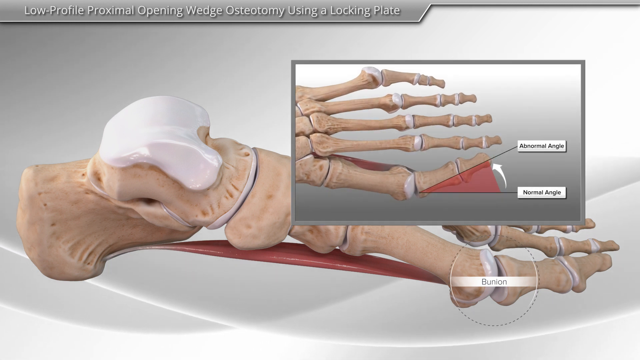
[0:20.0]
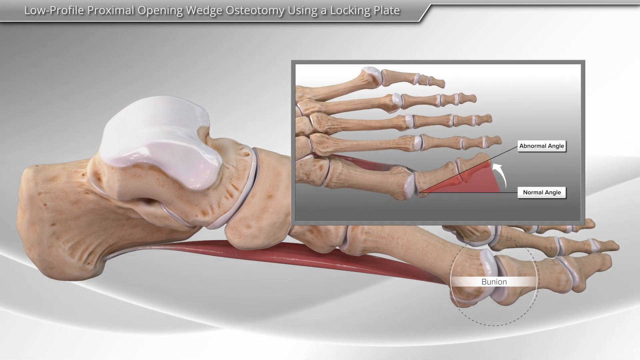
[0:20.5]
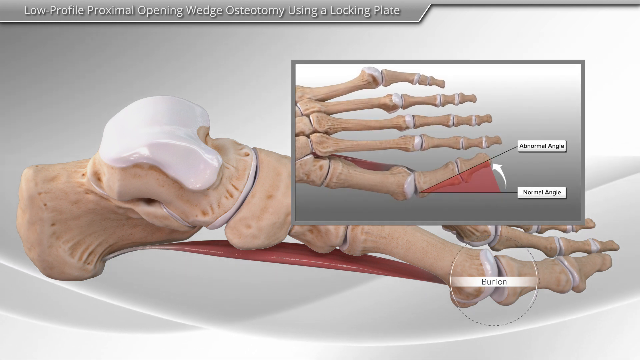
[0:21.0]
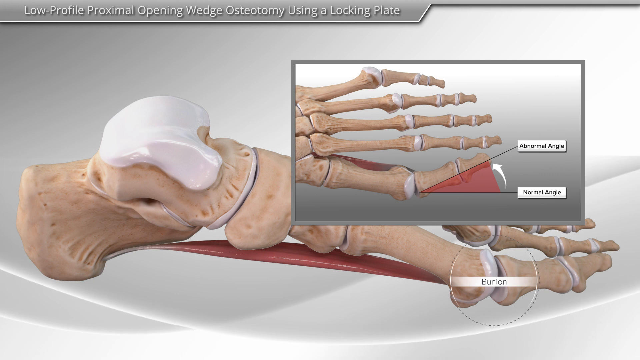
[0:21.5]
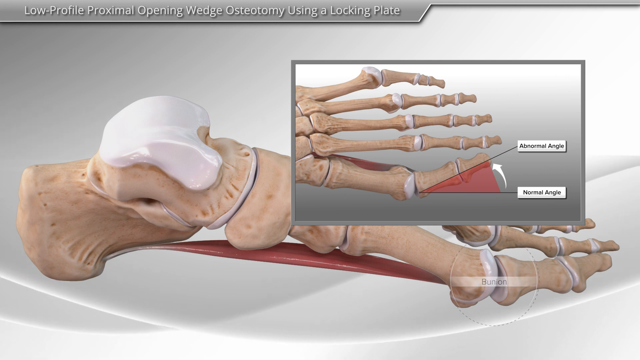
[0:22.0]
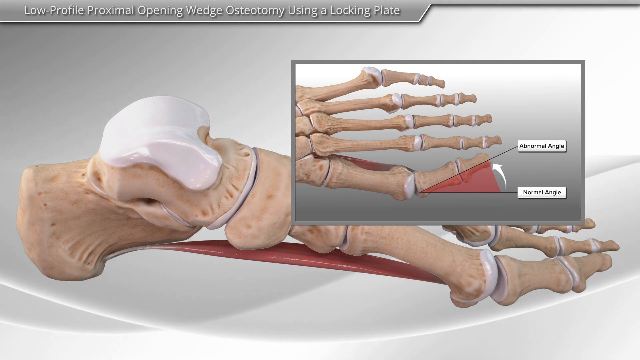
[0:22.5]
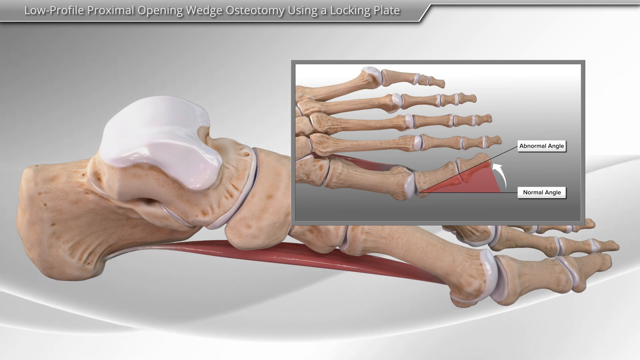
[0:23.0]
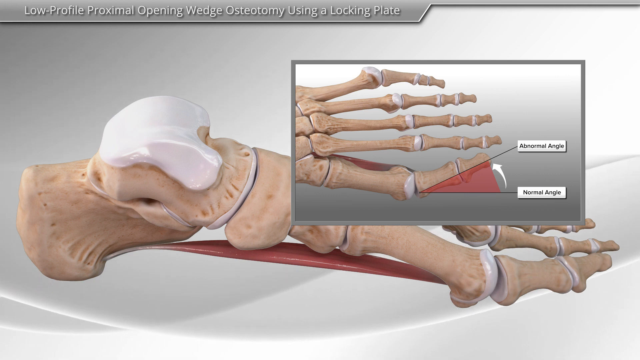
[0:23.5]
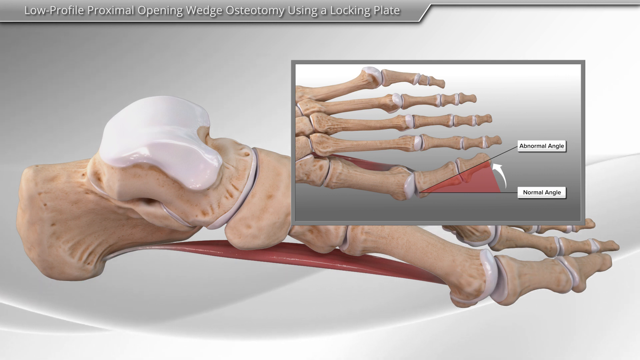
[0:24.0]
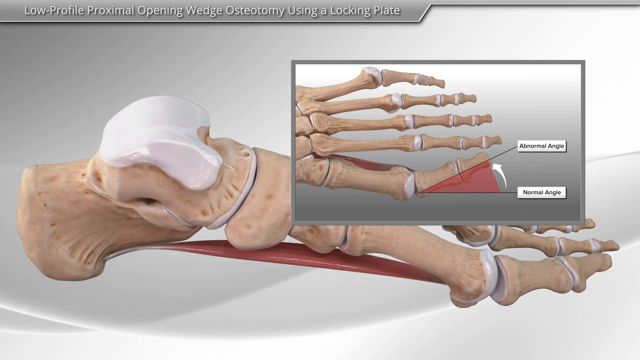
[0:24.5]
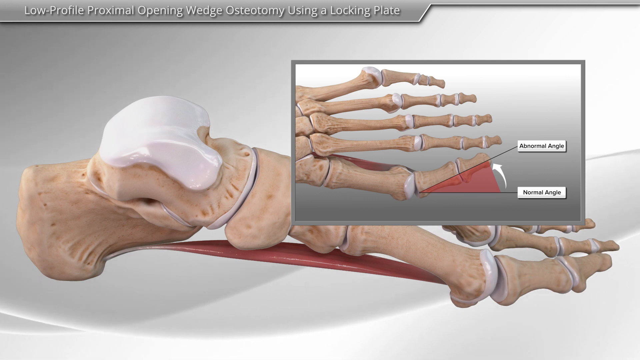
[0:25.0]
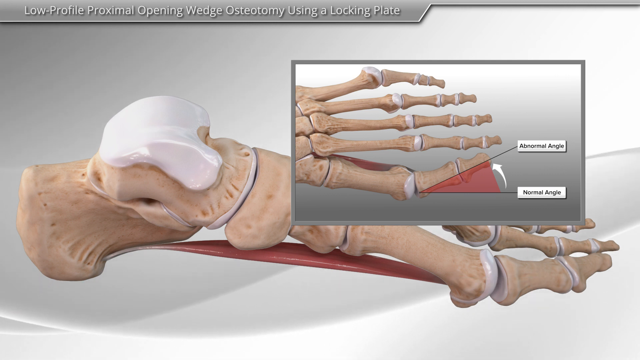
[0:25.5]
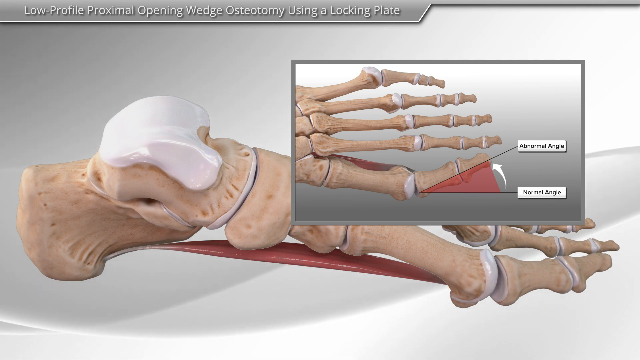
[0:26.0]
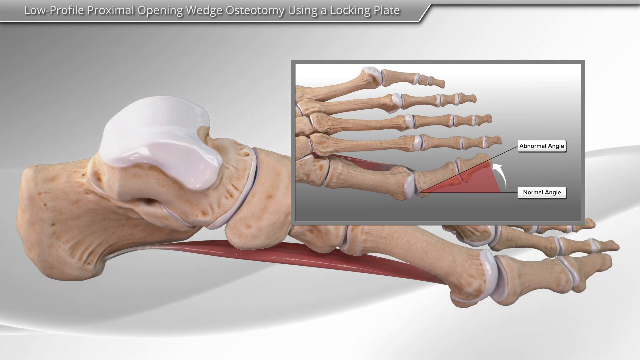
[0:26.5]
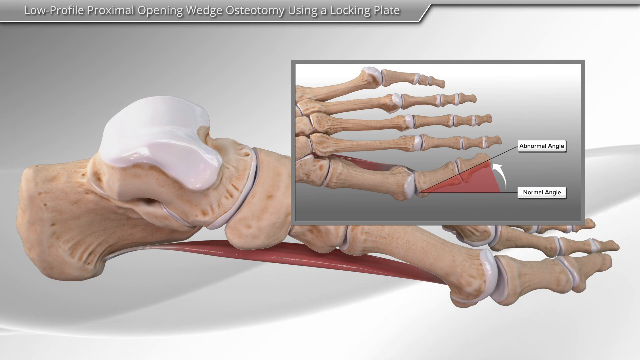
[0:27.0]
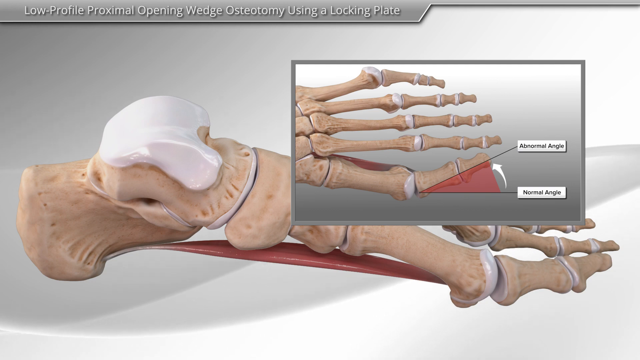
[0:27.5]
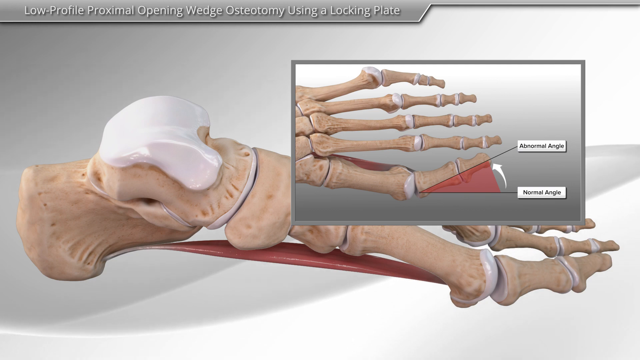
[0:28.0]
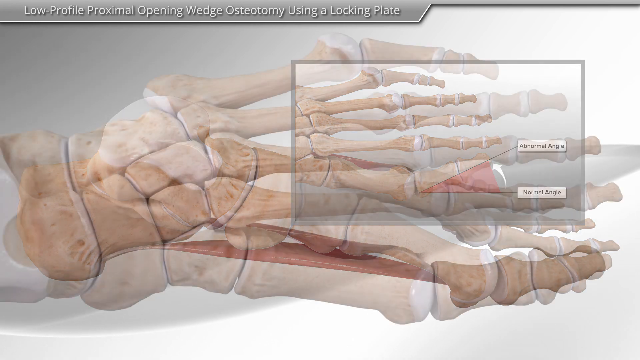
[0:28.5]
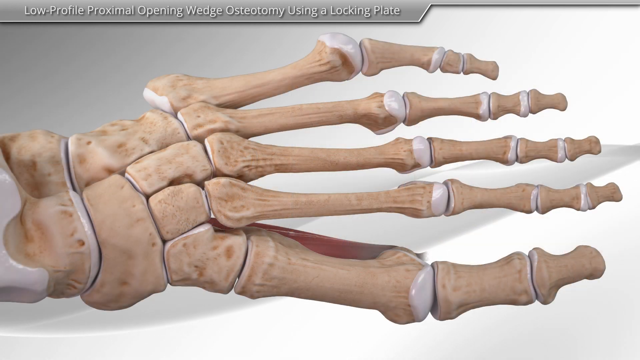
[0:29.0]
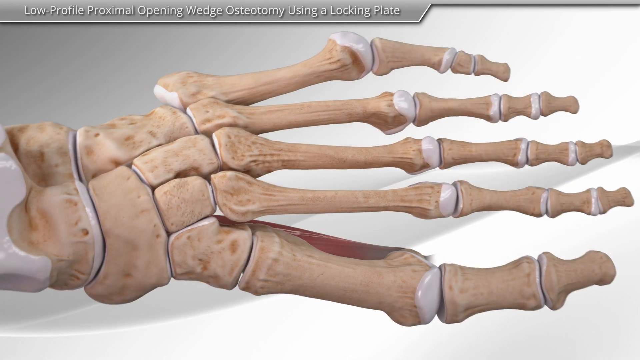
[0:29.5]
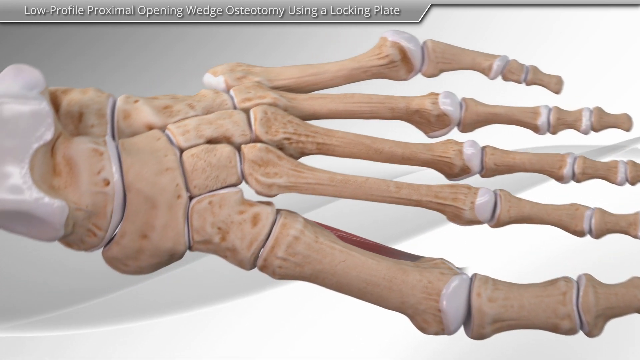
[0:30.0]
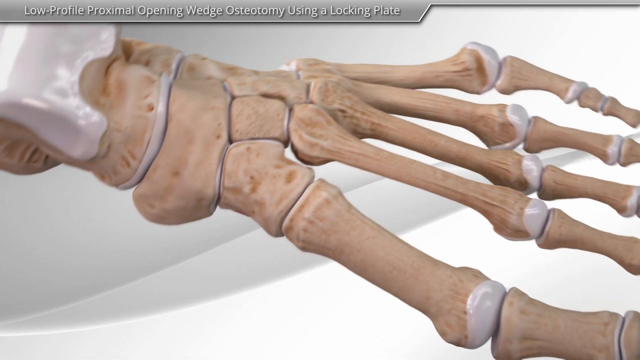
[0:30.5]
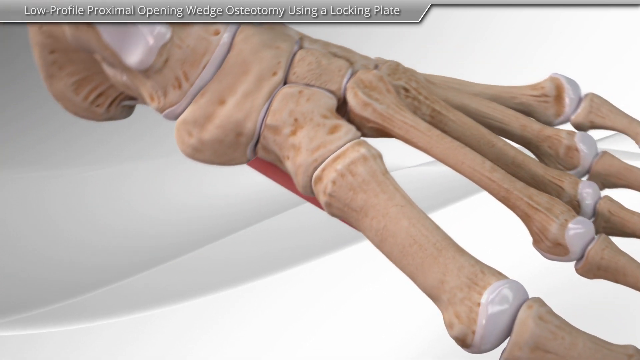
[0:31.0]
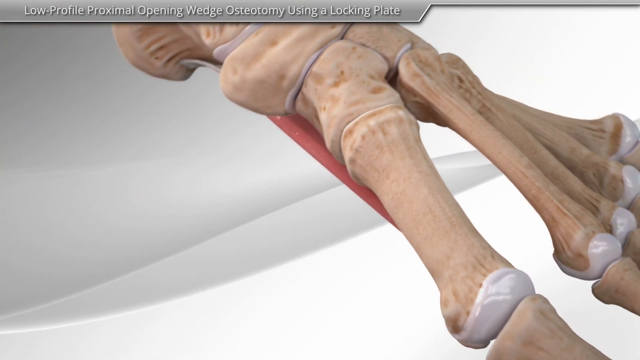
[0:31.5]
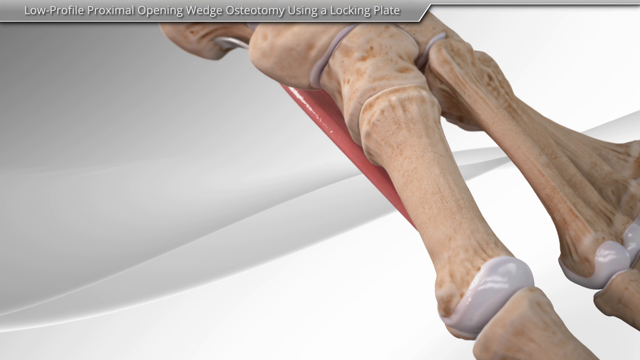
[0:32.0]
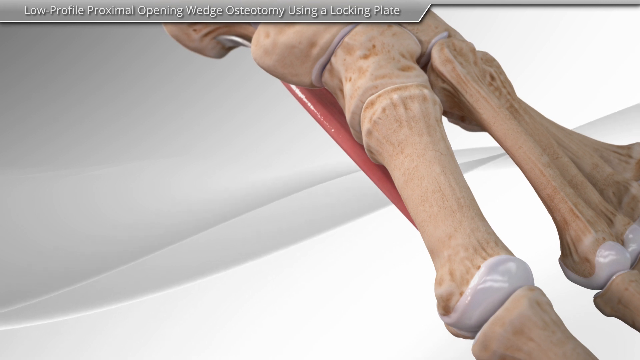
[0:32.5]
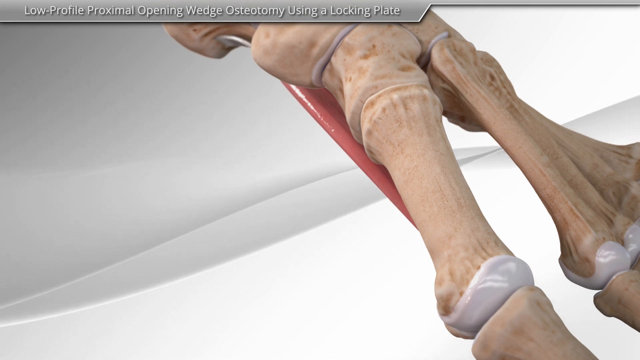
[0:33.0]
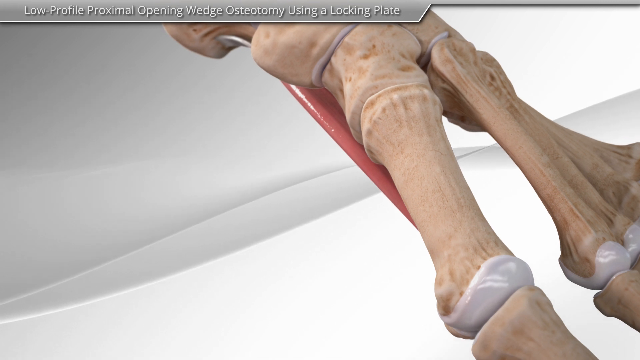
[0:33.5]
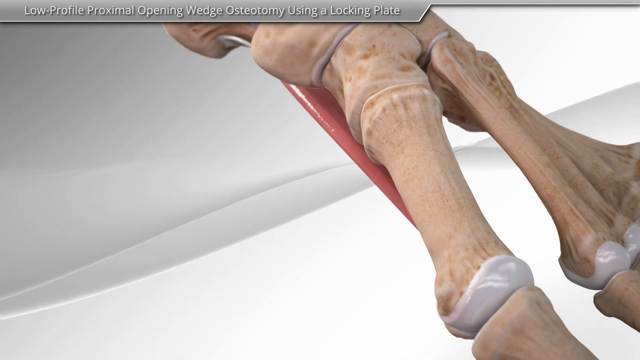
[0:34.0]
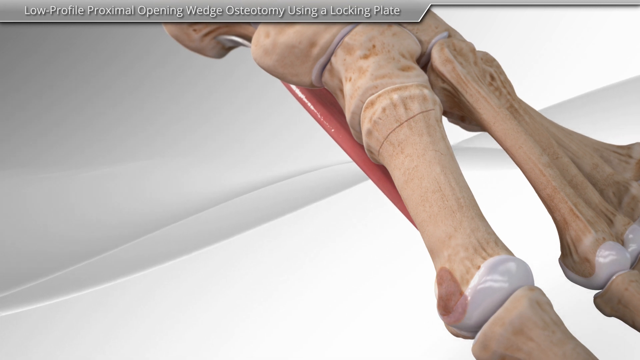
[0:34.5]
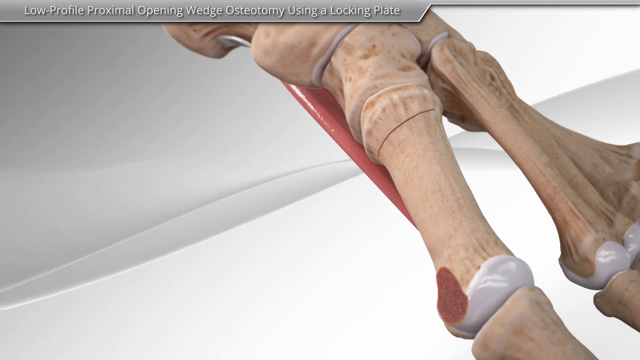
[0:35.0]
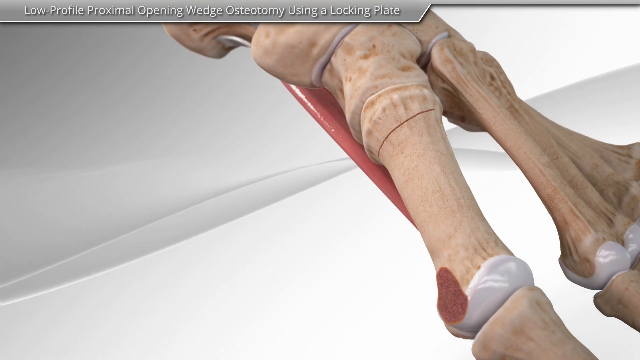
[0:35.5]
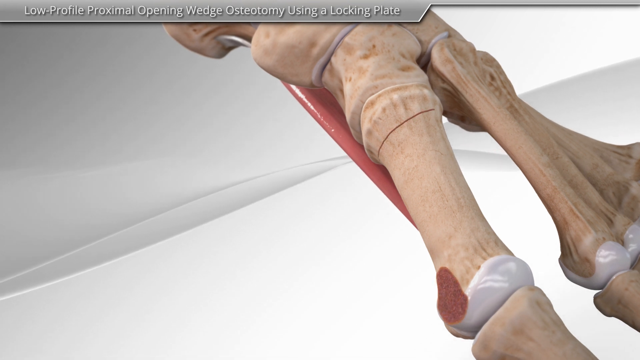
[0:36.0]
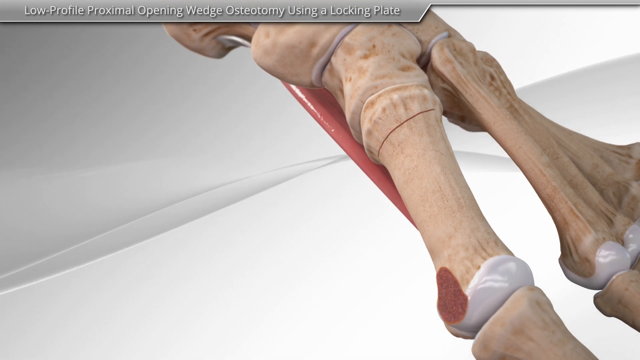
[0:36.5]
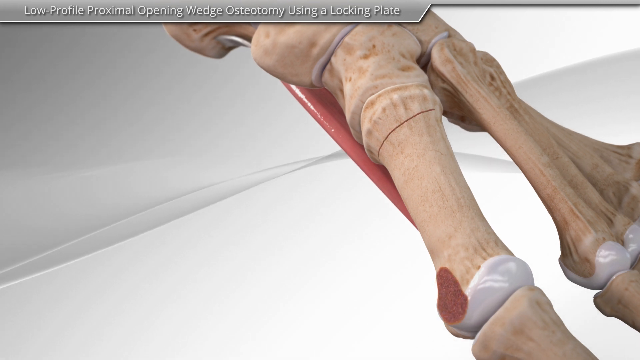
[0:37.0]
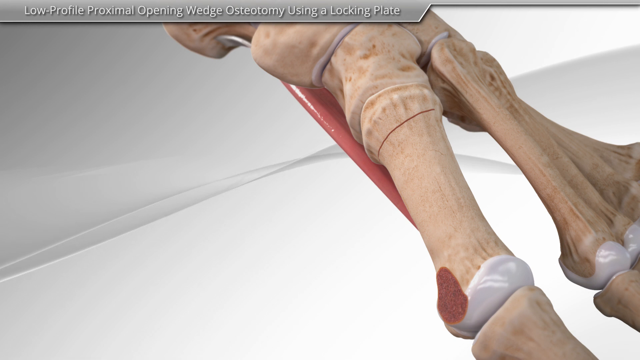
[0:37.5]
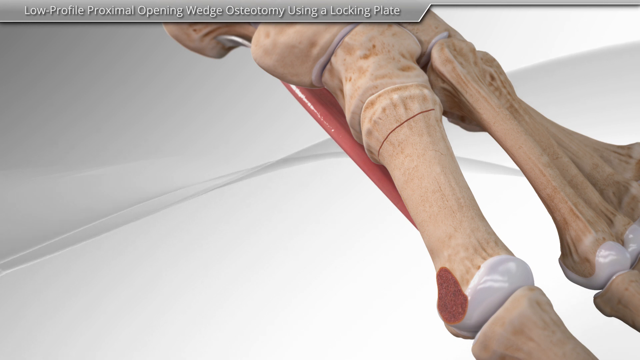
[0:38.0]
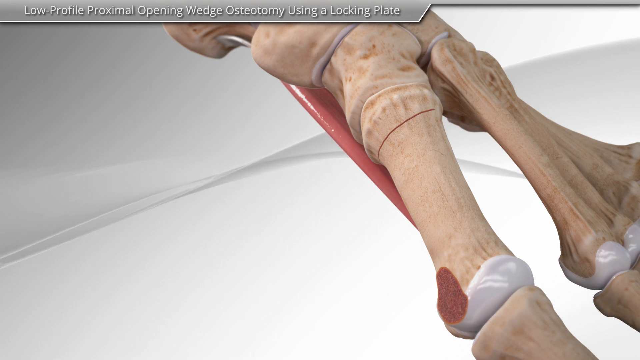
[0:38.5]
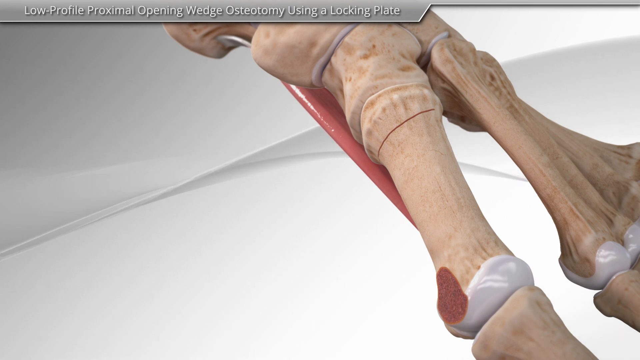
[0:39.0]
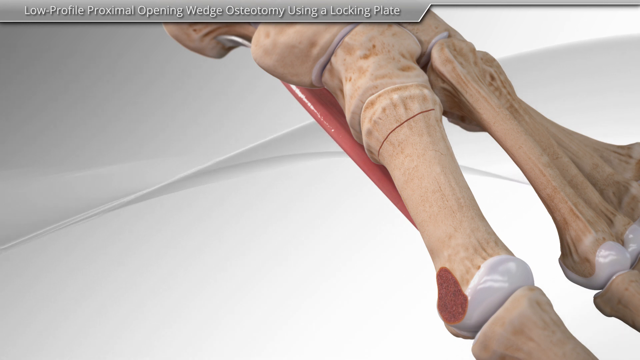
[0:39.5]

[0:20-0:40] A replica of the bones of the feet is shown against a white background. Two wavy, darker lines run across the background and move toward the left, making it appear as if the background is moving. In the background, the entire foot is viewed from the side with the toes pointing toward the right, and a gray box in front of the toes shows a close-up view of just the toes. The view fades out over several seconds and is replaced by a view of the toes as if seen from the top of the foot. The foot rotates clockwise and away from the viewer until it reaches a side view of the toes, with a line representing the bottom of the foot coming diagonally down from the top left toward the bottom right of the screen.